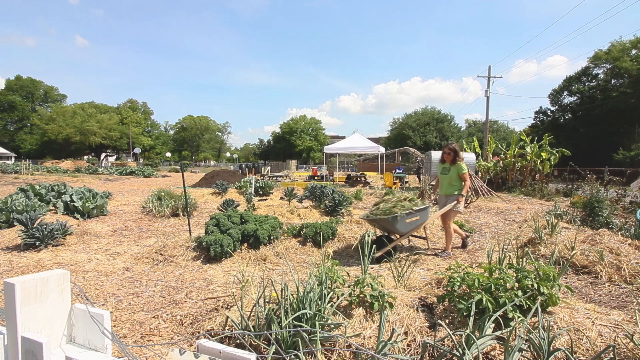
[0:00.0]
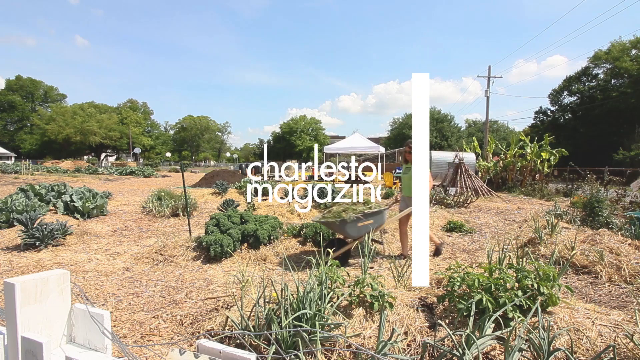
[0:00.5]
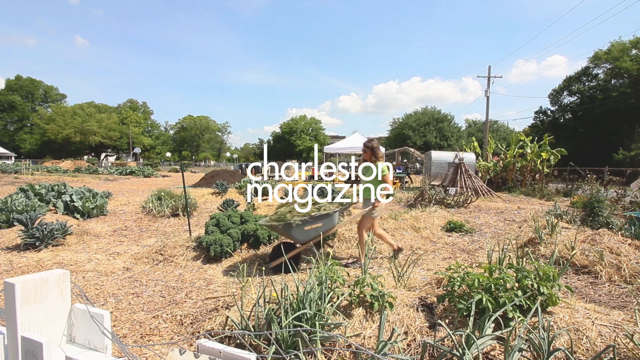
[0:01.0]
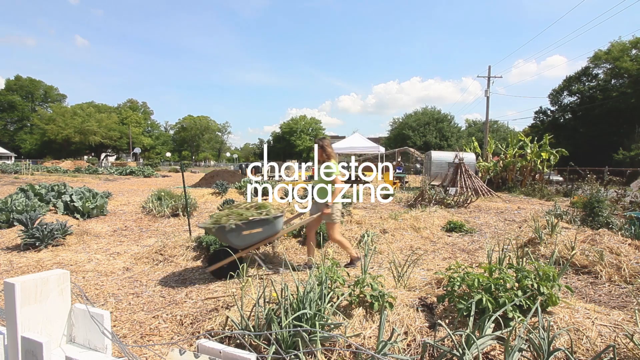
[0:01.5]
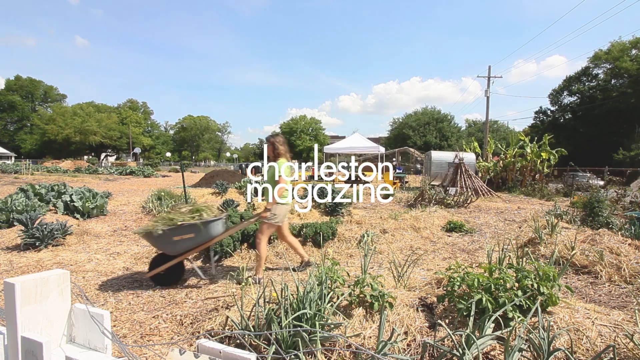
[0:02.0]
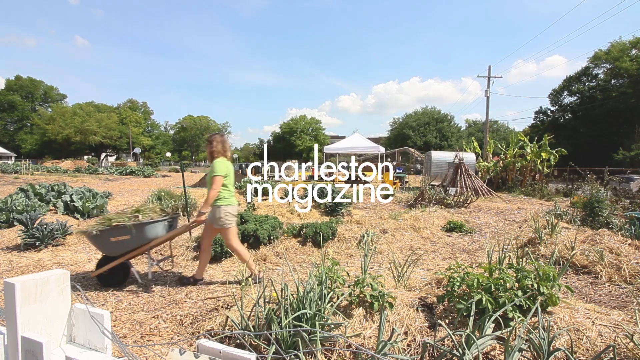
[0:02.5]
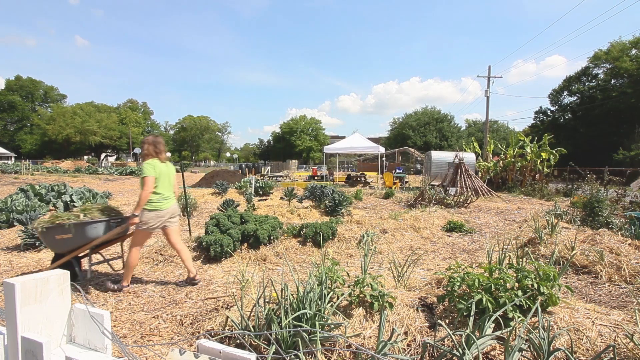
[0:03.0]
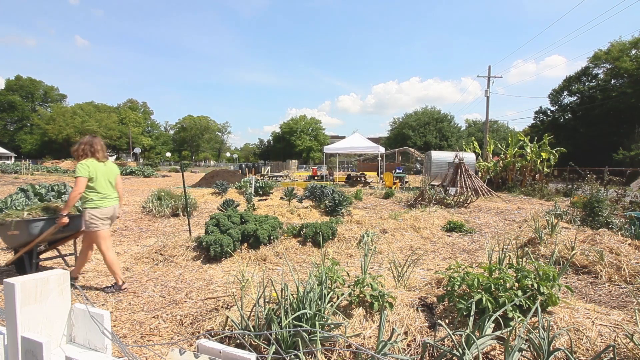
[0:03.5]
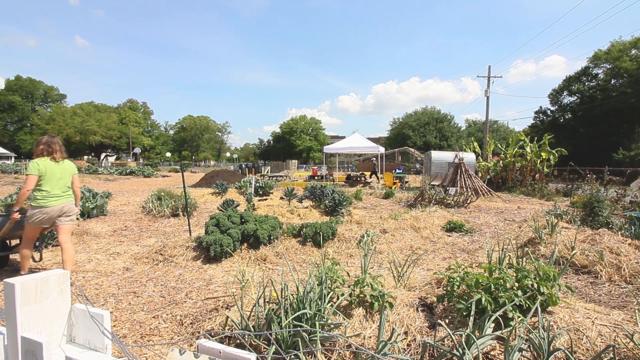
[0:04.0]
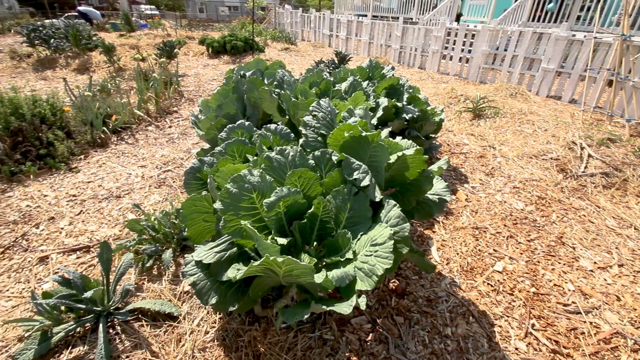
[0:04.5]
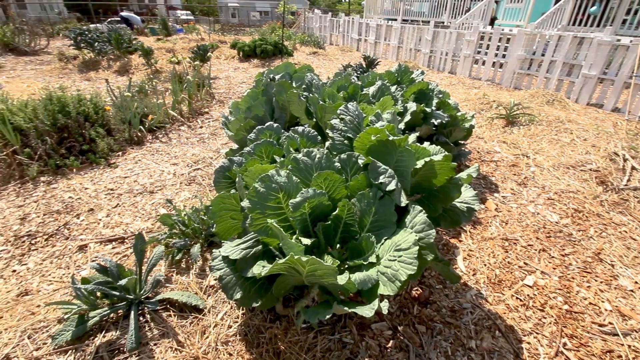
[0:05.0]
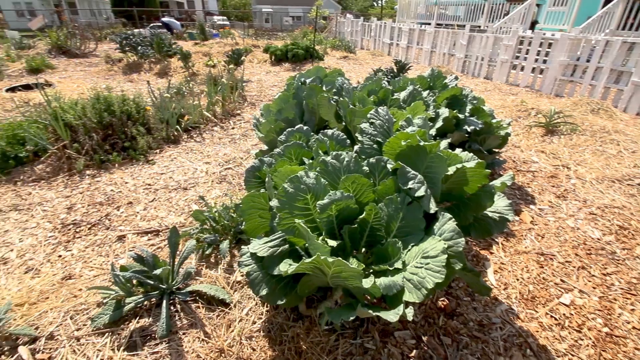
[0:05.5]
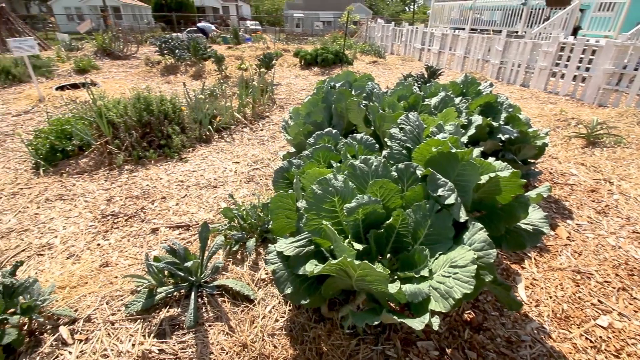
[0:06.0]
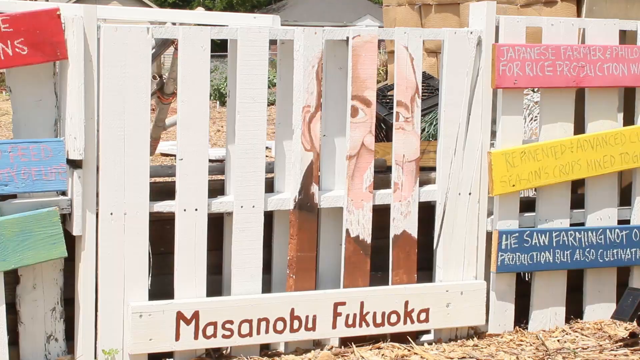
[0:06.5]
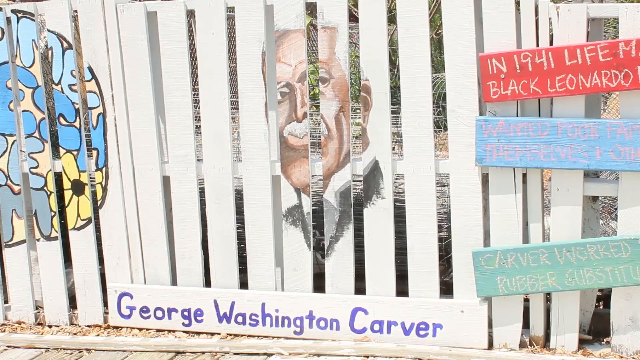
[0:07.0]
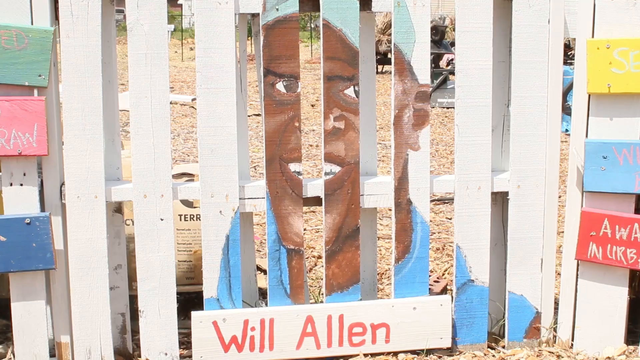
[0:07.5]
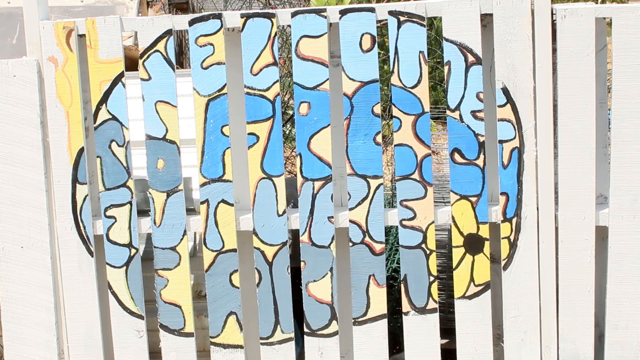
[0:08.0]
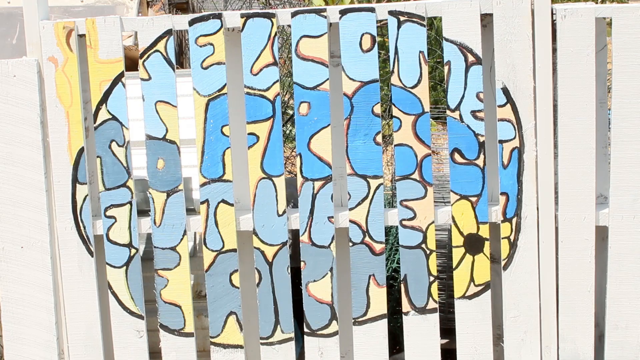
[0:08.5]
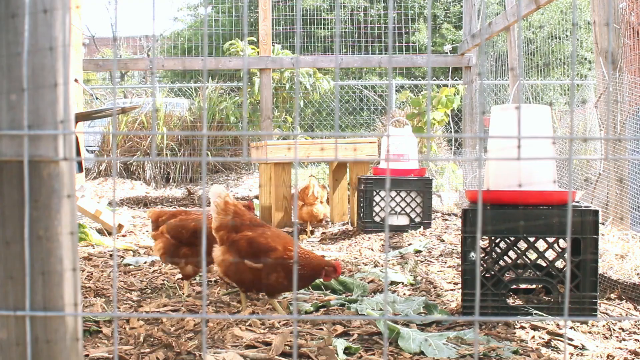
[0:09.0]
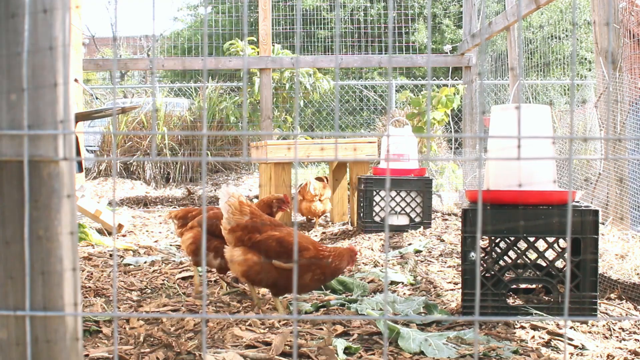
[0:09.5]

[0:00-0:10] The video opens on what appears to be a greenhouse or plot of land with various plants growing, with information relating to Charleston Magazine. A female wearing a green shirt appears at the very start. Close-ups follow of some large green-leafed plants, and the scene transitions to a white fence with George Washington Carver on it, a white picket fence with Willie Allen on it, and a white fence with various art depicted on it. Chickens inside a chicken coop are shown next.